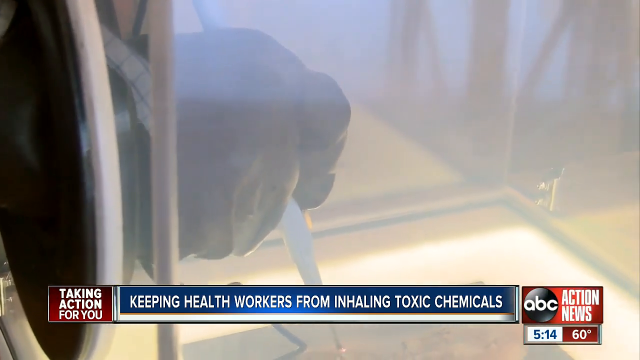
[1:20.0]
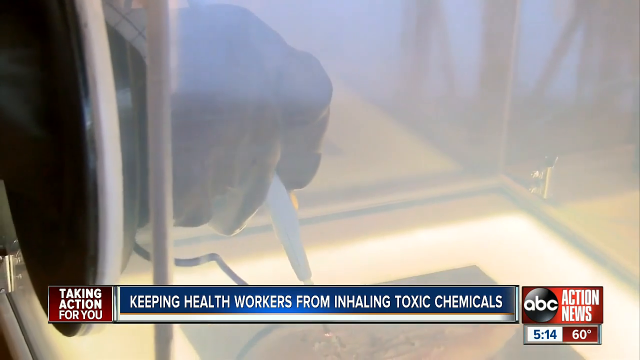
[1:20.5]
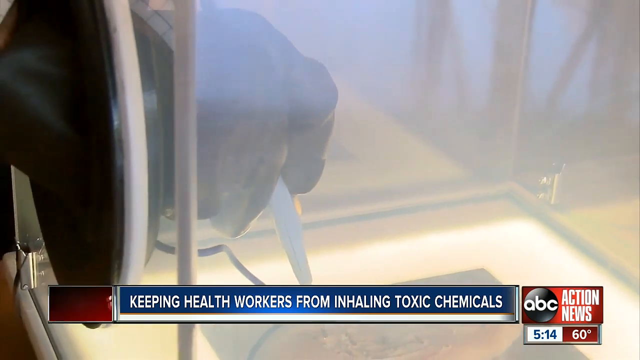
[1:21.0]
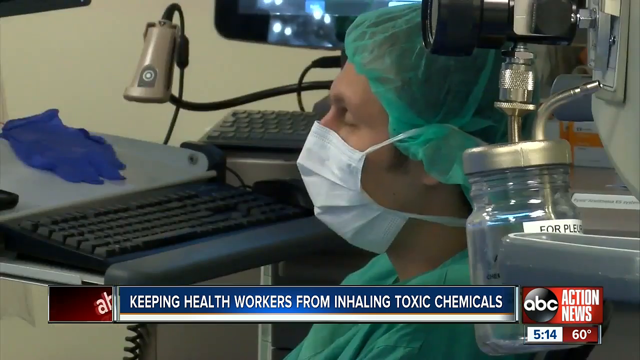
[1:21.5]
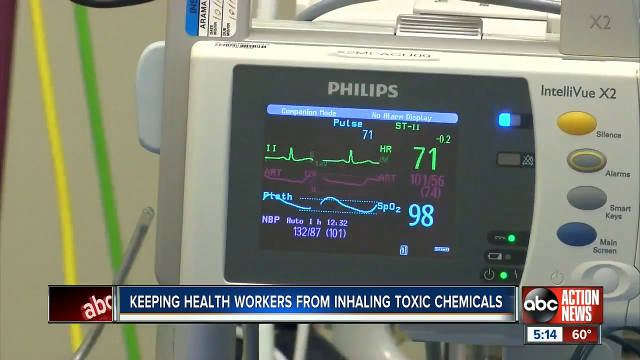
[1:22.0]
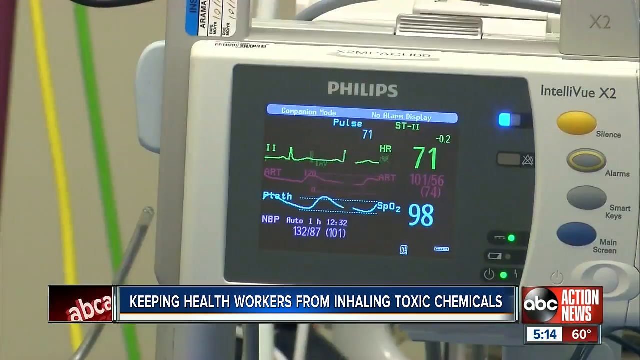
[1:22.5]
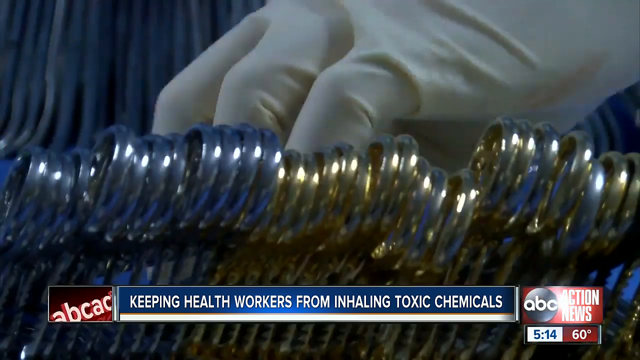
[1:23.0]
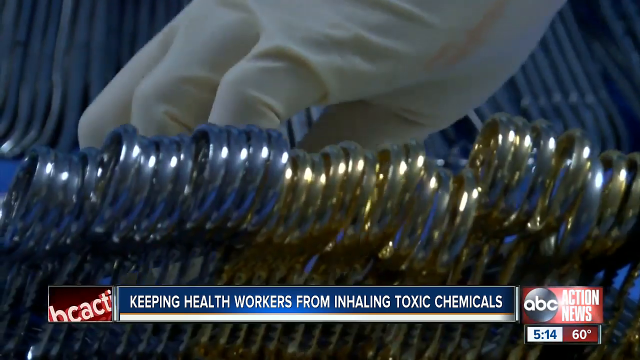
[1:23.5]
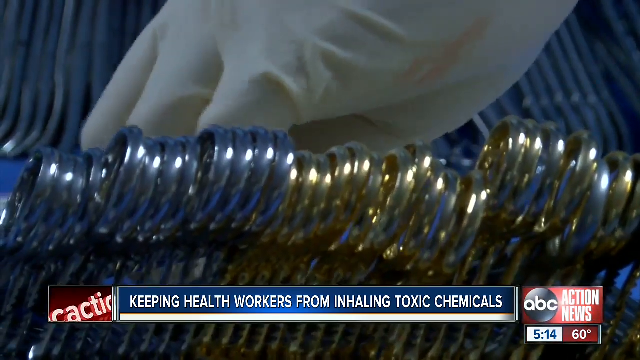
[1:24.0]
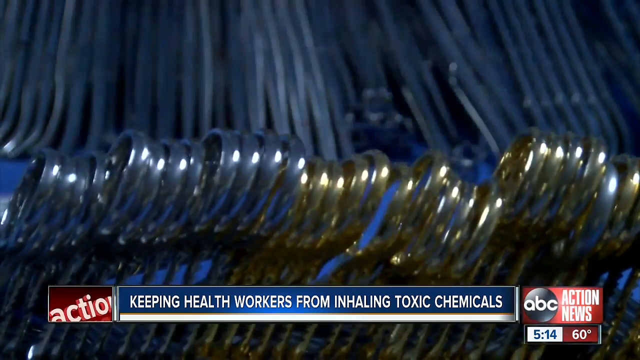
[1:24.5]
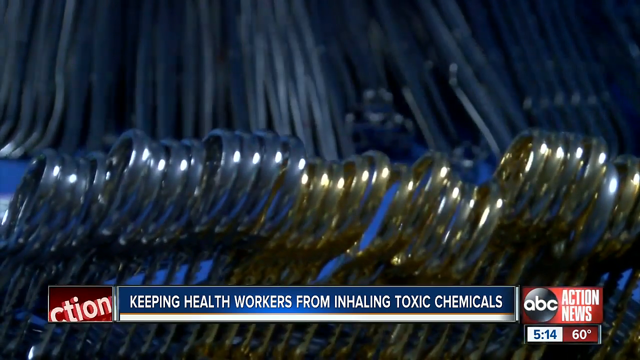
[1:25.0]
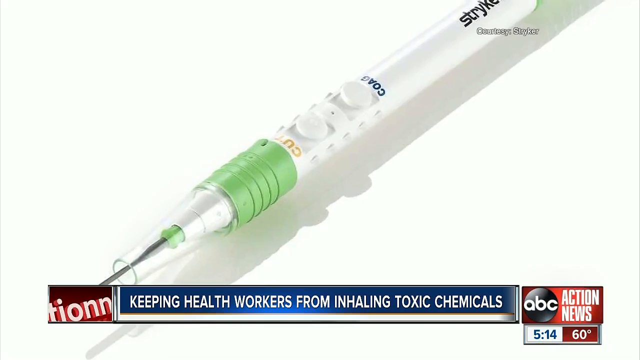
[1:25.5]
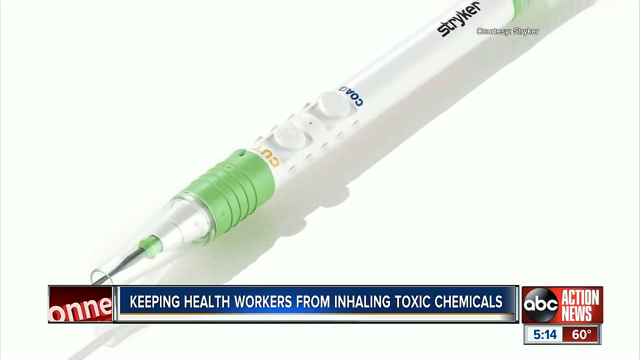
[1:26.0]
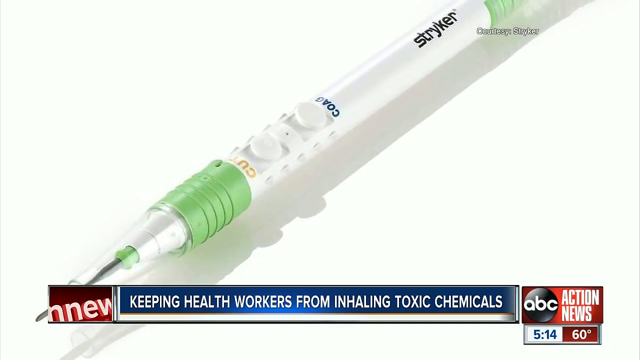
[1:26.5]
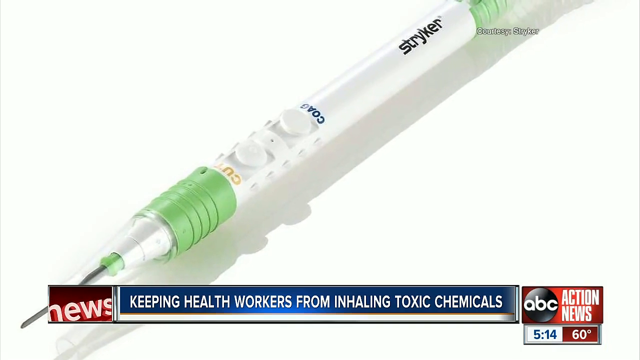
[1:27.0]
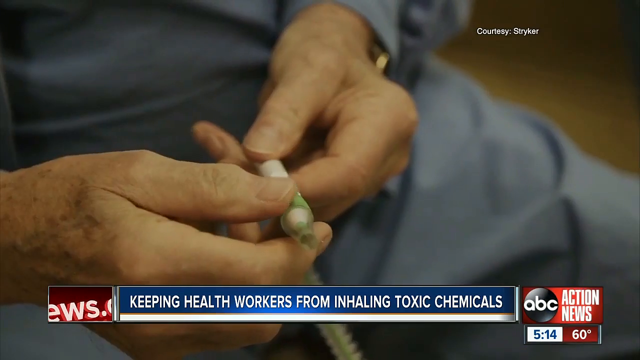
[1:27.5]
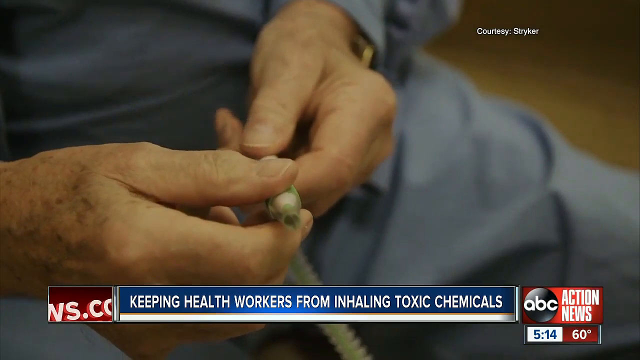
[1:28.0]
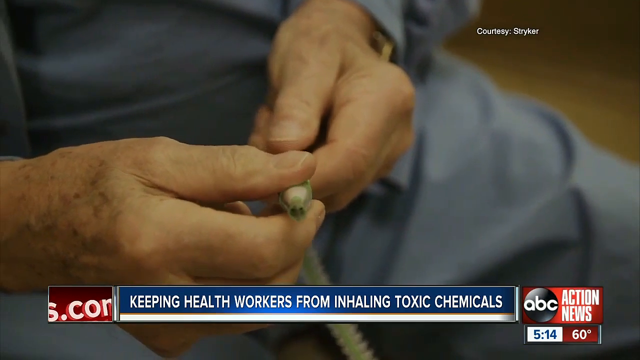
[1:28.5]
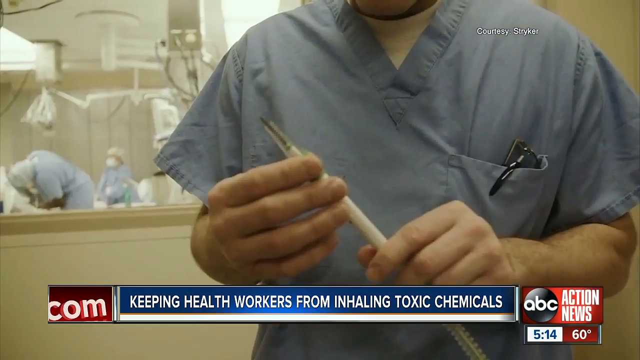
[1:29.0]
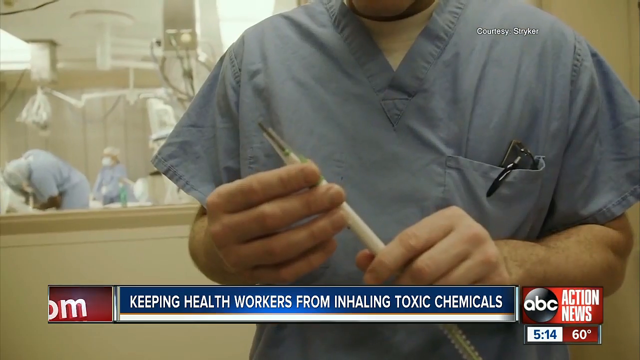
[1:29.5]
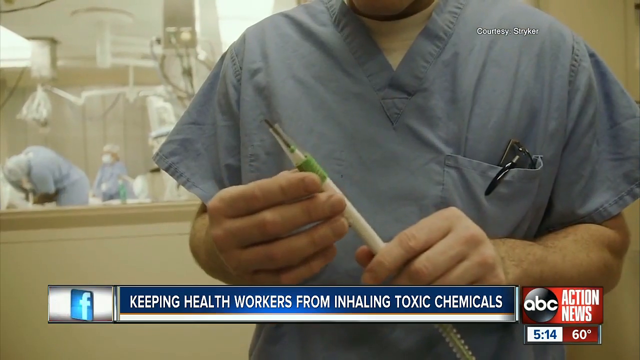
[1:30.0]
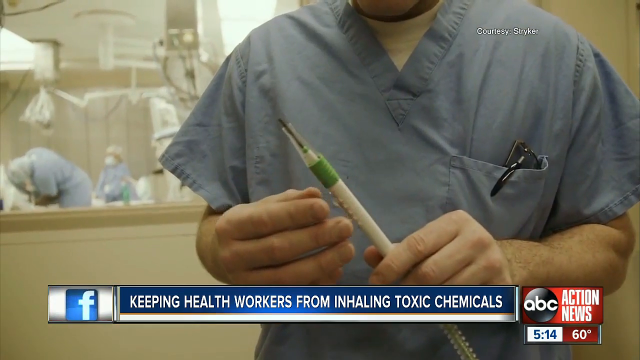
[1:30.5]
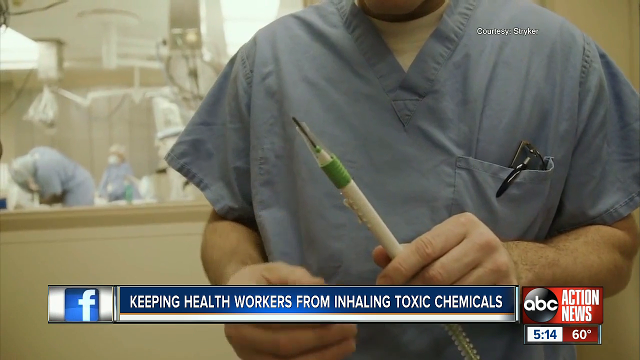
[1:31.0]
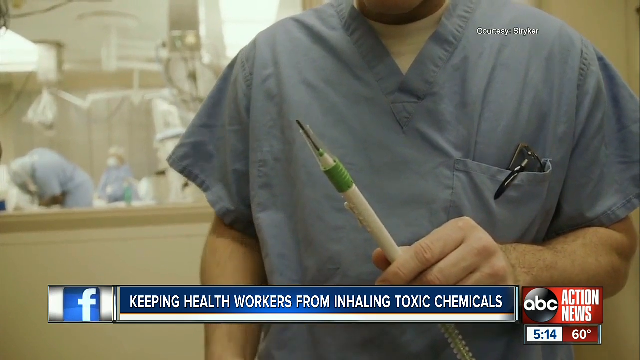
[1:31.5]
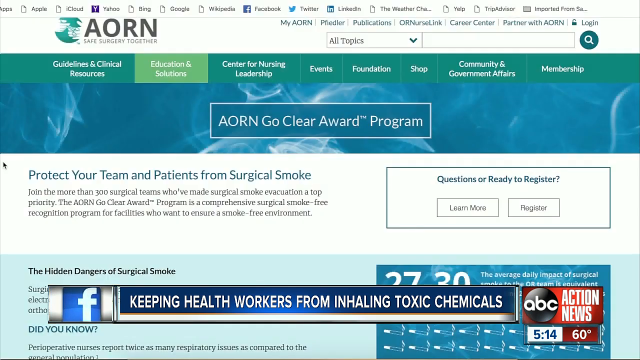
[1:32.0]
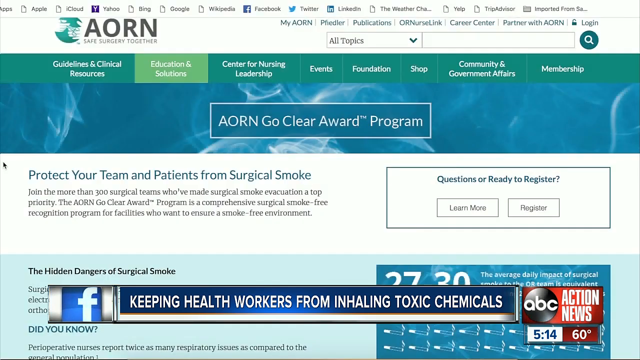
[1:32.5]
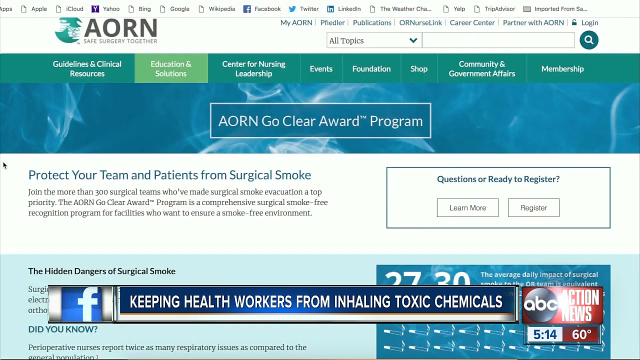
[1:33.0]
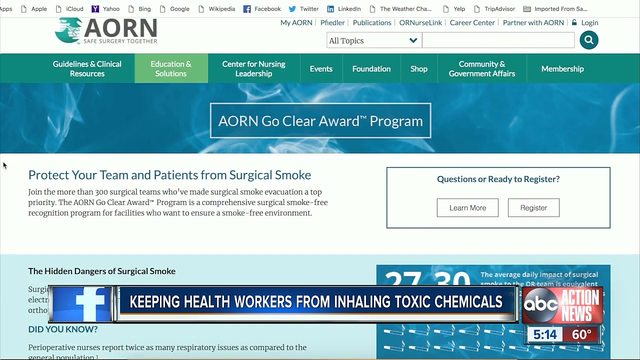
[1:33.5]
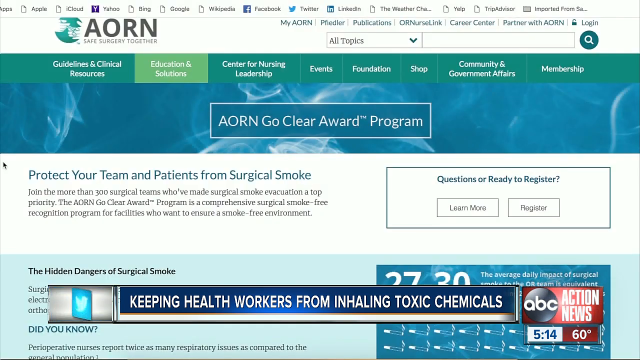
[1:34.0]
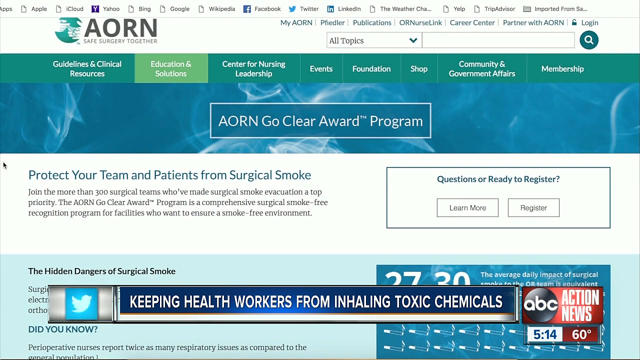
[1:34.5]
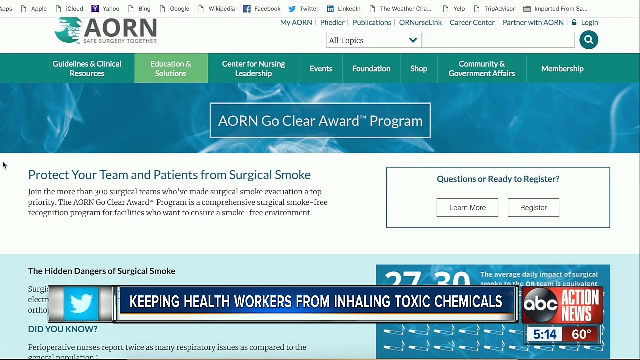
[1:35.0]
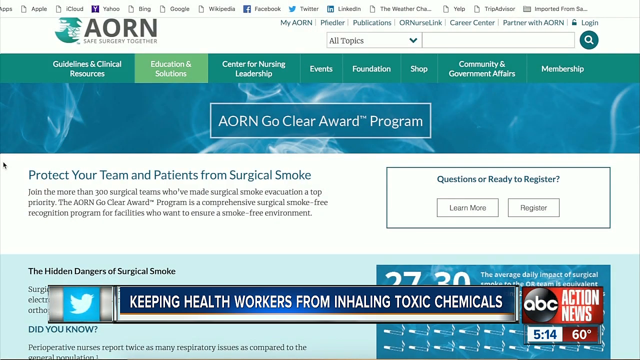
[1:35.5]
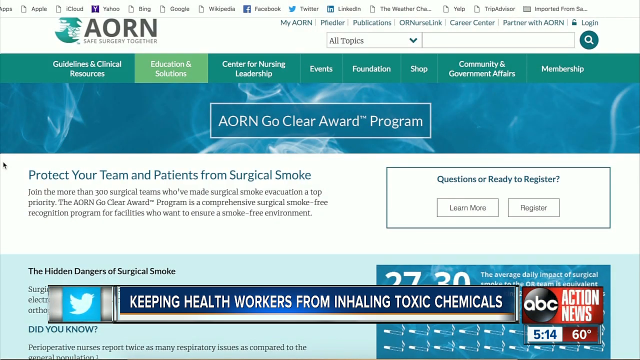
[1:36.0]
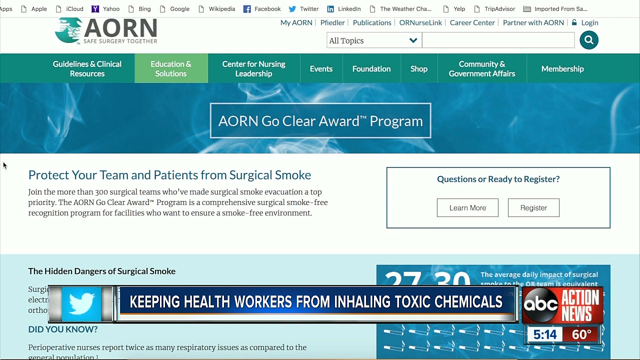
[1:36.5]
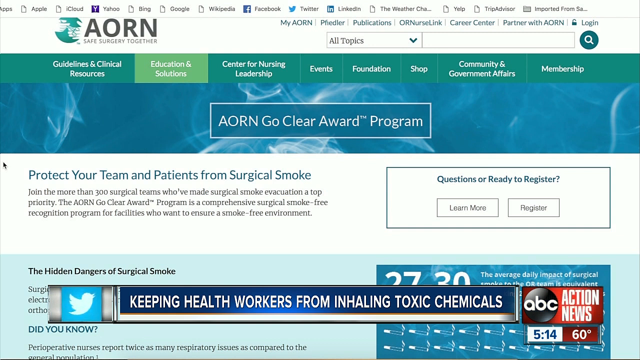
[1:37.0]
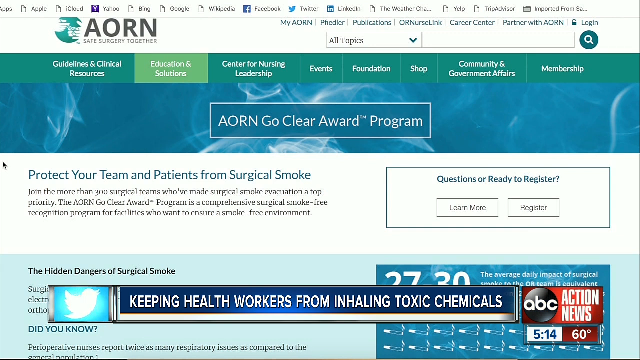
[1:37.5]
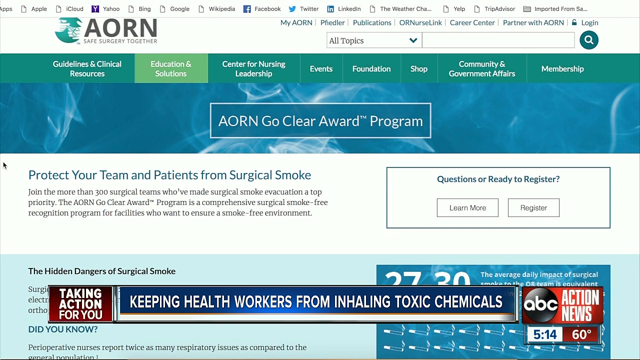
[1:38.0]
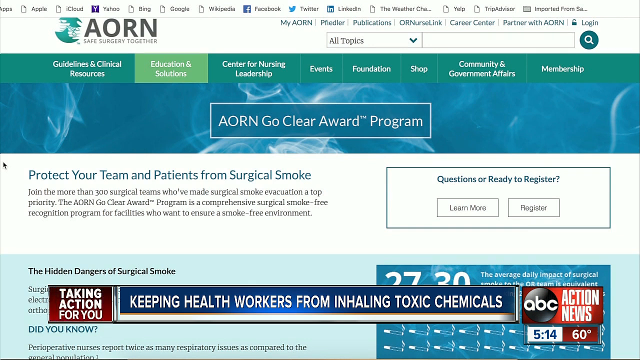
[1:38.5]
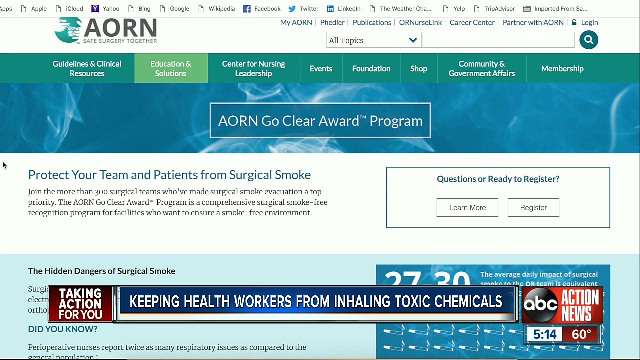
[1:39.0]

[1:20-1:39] A close shot shows a man using a tissue to experiment, with the needle piercing the tissue. A woman in a lab then appears, wearing a blue face mask and a green hat. There are machines on the table, including a cream-colored BP machine, along with silver and blue things, and she picks up a gold thing from the table. A green and white syringe pops up with the word "STYLER" written in black against a white background; the needle has a pointer. A man then holds the syringe in his hands; his hands are those of a white person, and the other hand is hairy. He is a nurse inside a hospital holding the syringe. A page pops up with "AORN" written on it and the words "award program" in green and blue, with white on it as well.